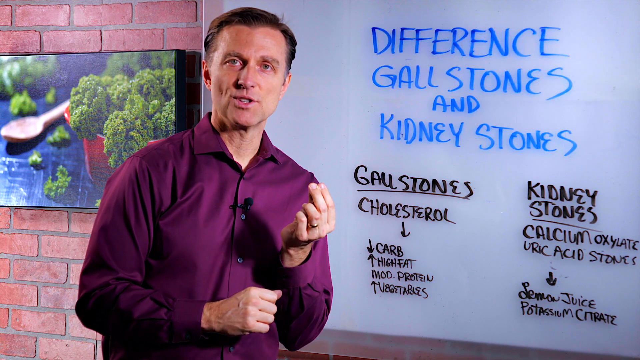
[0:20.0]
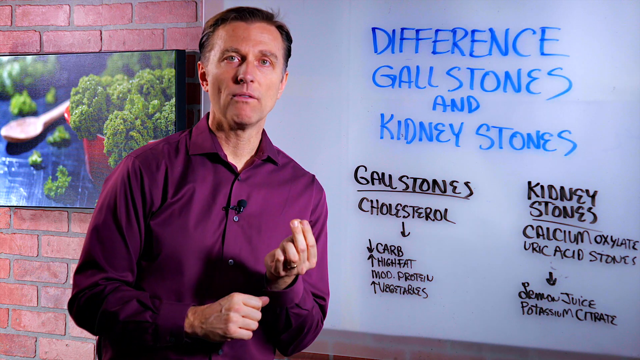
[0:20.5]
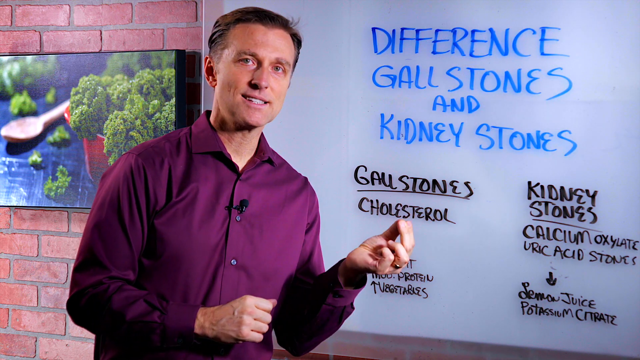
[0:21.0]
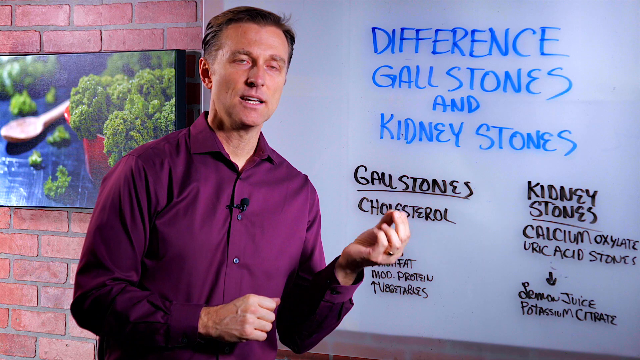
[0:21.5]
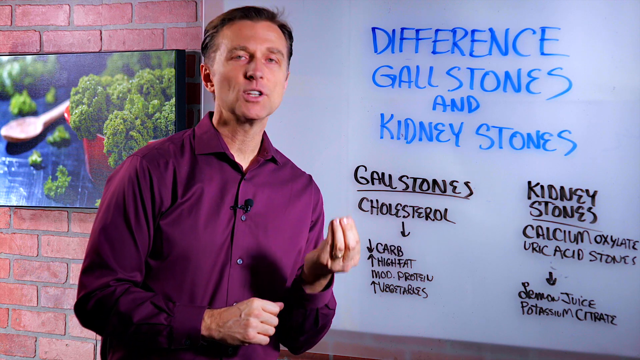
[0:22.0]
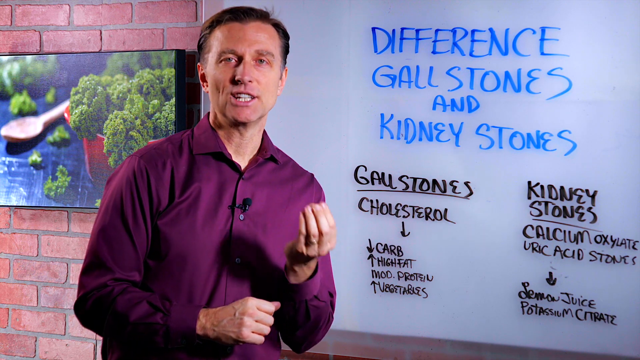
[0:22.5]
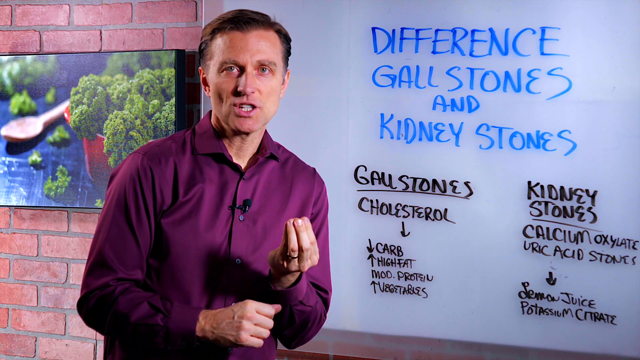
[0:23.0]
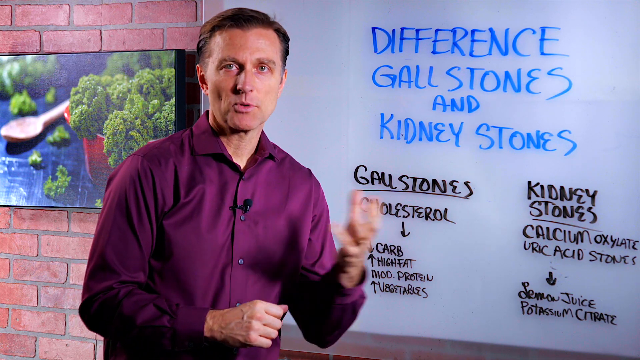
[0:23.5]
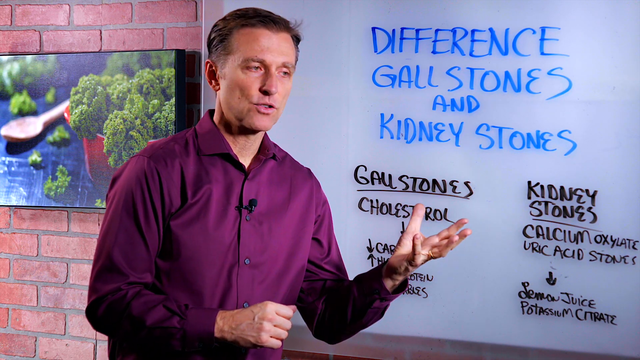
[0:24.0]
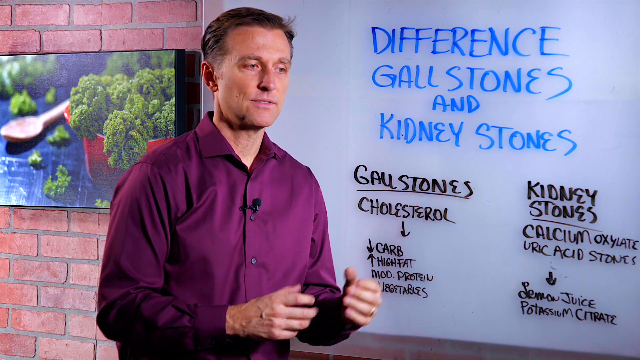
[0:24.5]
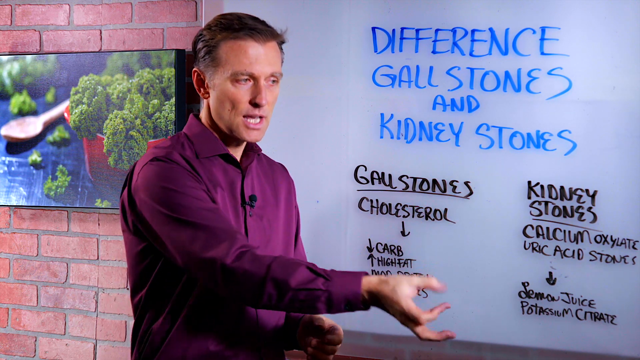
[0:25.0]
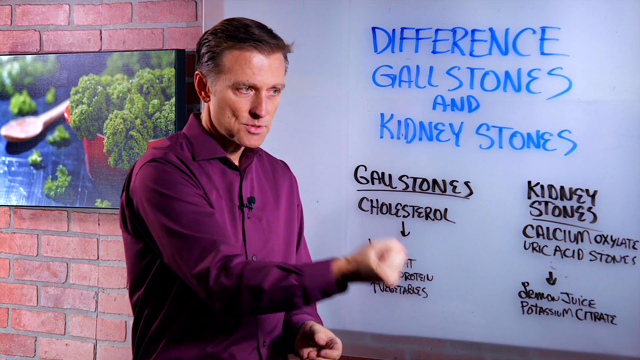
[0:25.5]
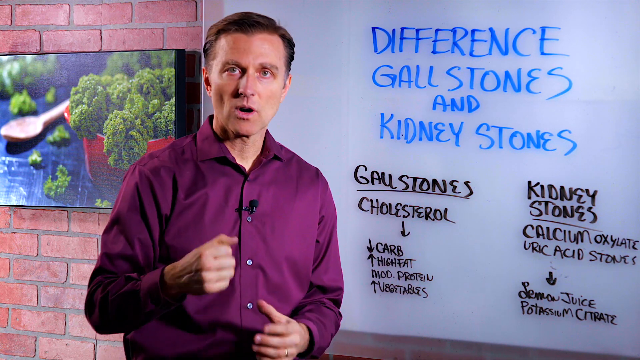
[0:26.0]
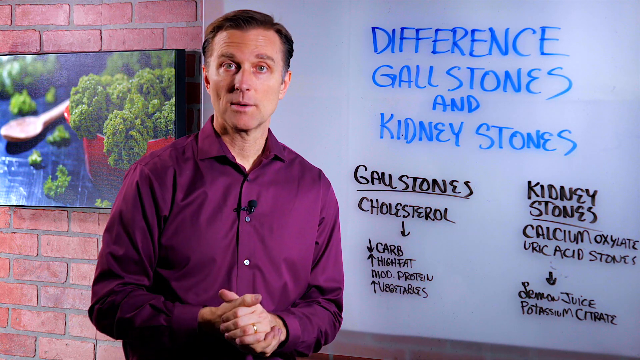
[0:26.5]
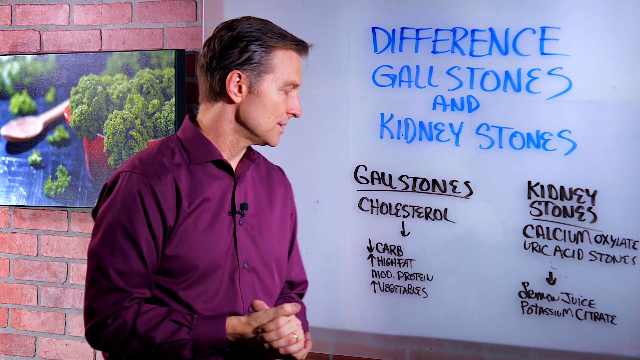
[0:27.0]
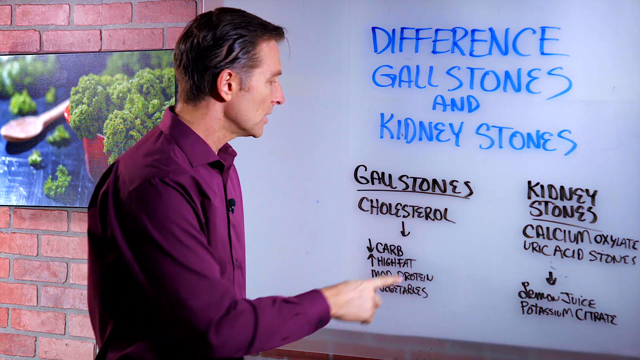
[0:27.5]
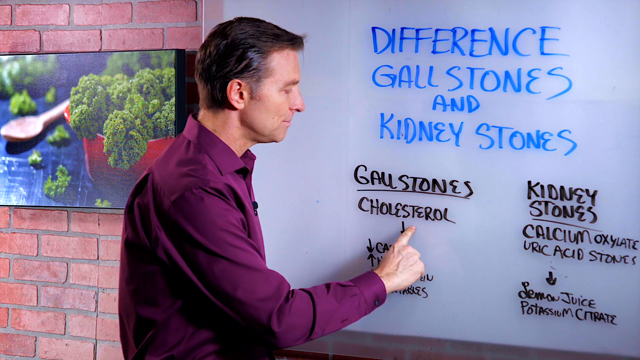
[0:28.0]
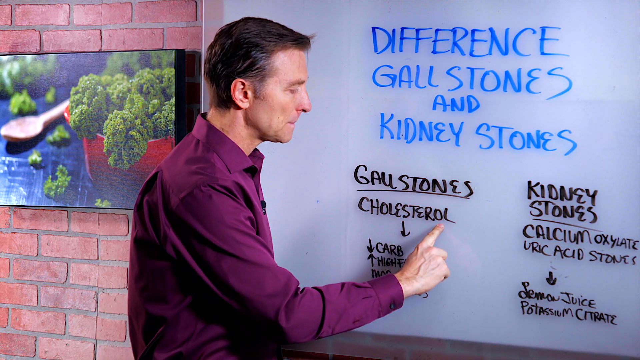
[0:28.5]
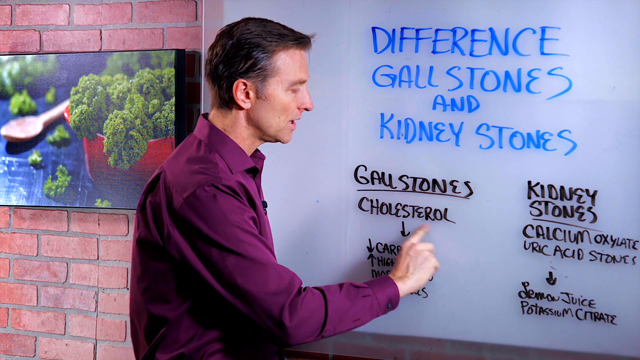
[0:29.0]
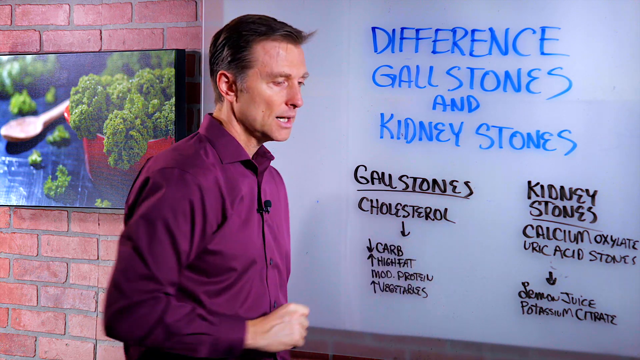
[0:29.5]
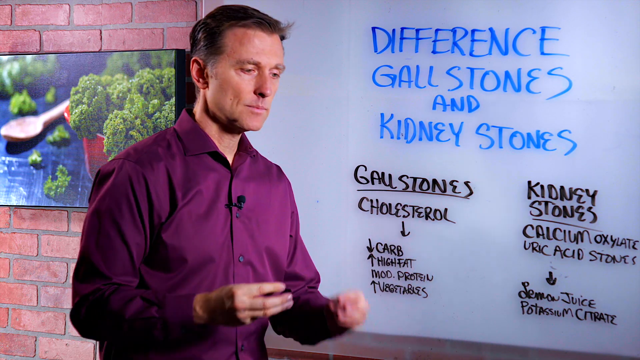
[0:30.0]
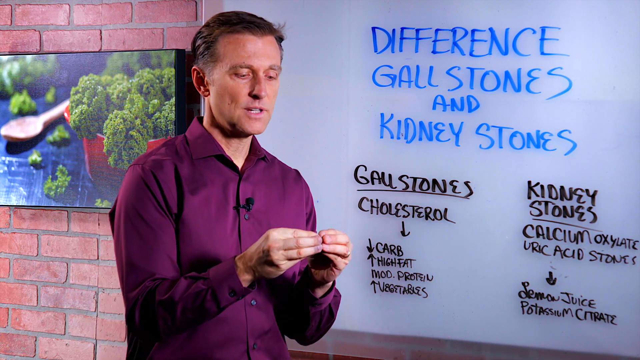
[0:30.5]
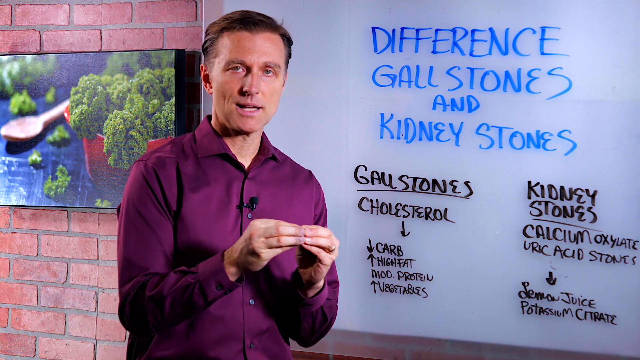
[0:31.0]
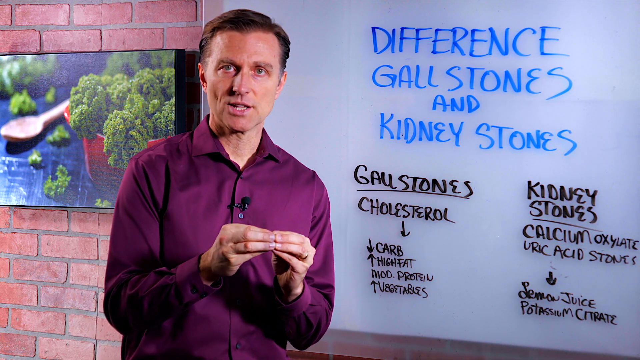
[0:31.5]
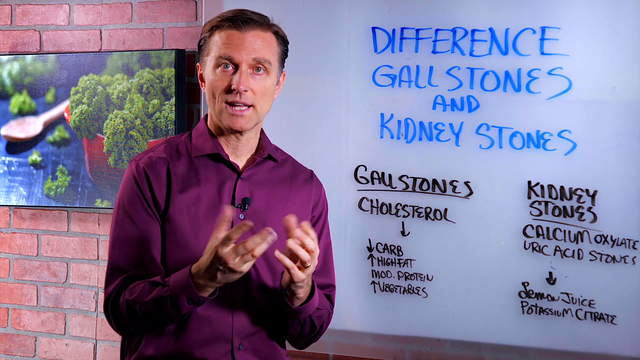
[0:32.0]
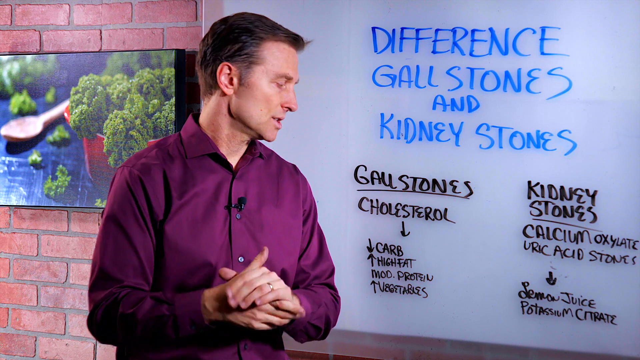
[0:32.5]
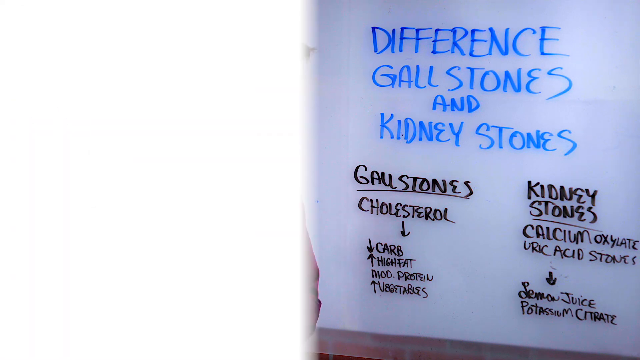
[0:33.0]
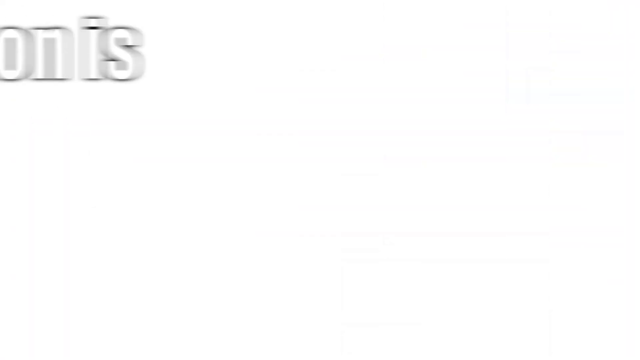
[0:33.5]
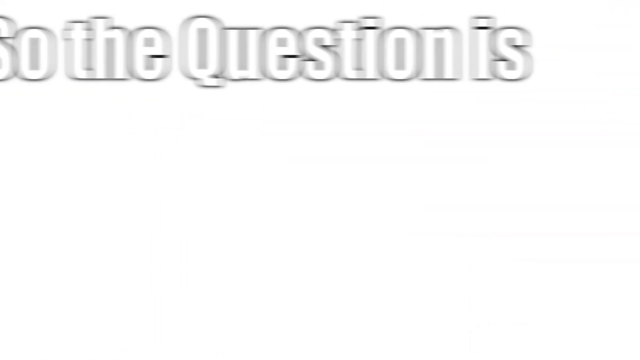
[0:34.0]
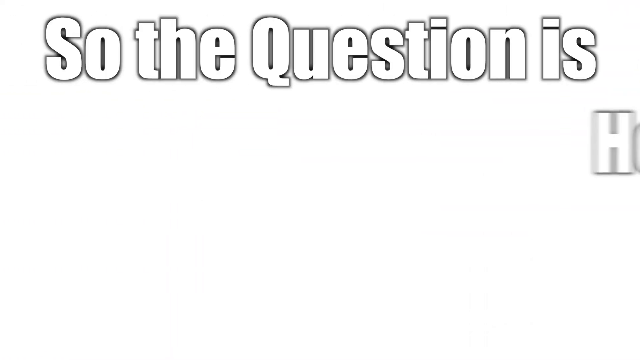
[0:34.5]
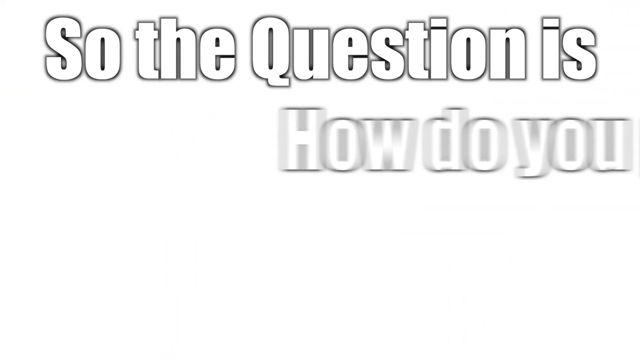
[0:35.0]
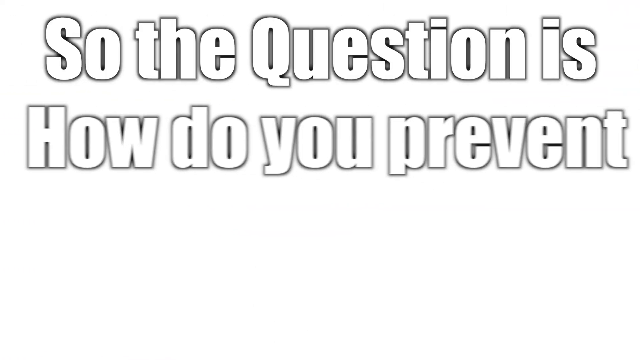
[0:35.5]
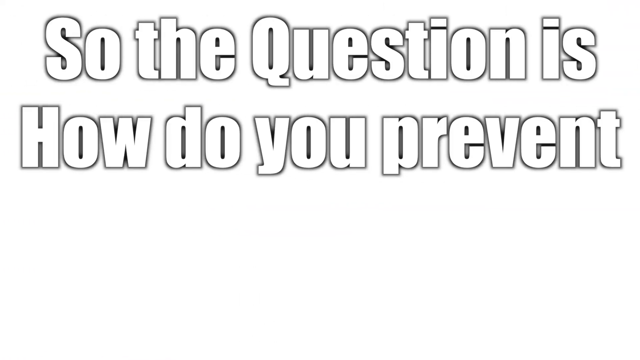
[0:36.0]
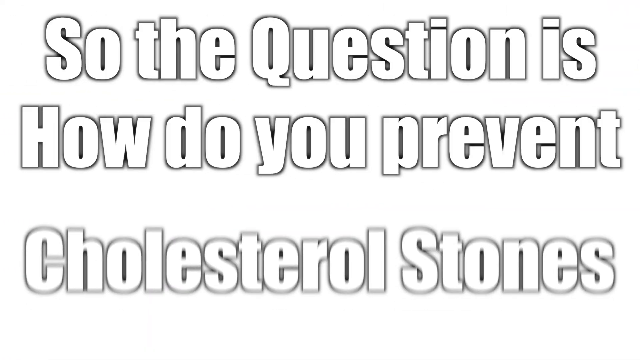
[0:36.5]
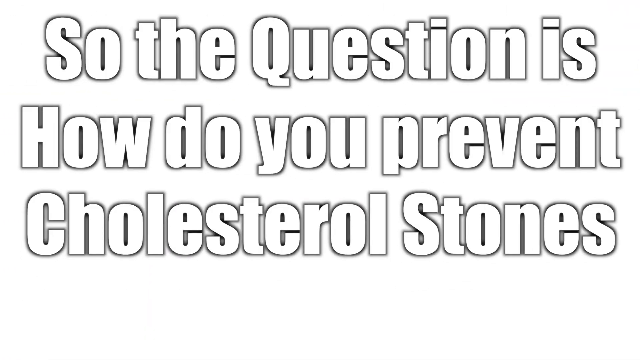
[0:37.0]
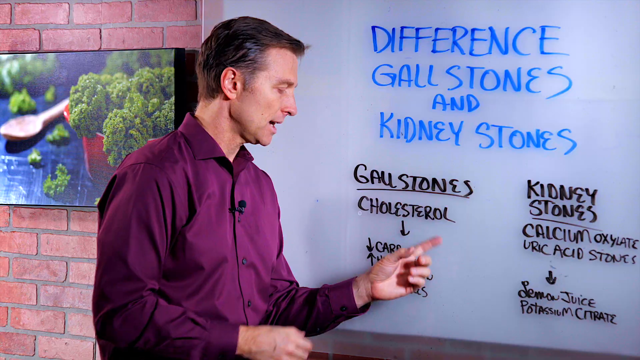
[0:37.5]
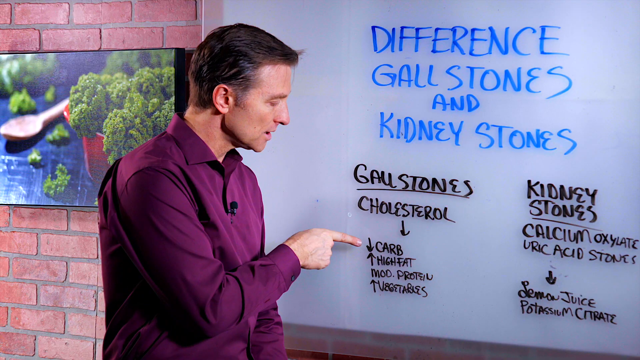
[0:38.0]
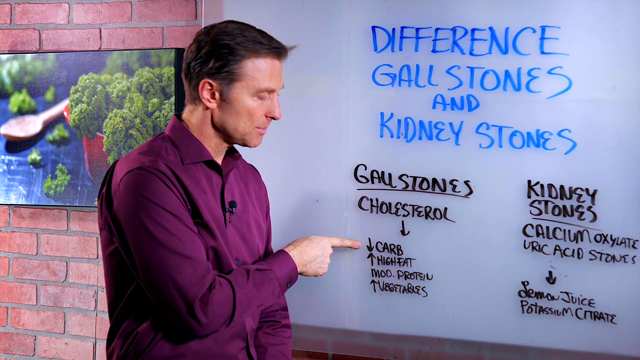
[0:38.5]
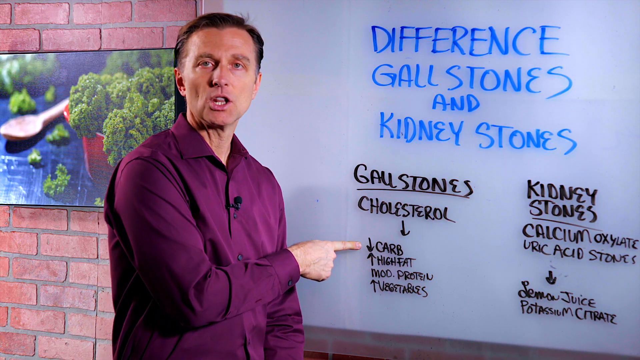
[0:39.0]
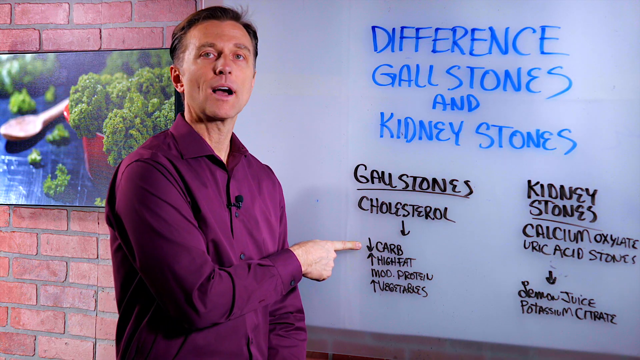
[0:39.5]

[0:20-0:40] The man with short brown hair and the purple button-down collared shirt keeps speaking to the camera, with the whiteboard behind him on the right and the brick wall behind him on the left, where a photograph or artwork shows a green vegetable or plant in a red pot, a wooden spoon to the left of the pot, and some of the green material scattered on the blue surface. His left thumb, index and middle fingers are pinched together and facing up, while his right hand is clenched and resting in front of his abdomen. He wears a wedding ring on his left hand. With his right hand in a fist he makes an away-and-toward motion, pushing it out and bringing it back toward his abdomen. He then clasps his hands, turns toward the whiteboard and gestures under the word "cholesterol" with his right index finger. He pinches all his fingers against his thumbs on both hands and touches his fingertips together as he speaks. Then a white background appears with text outlined in black and white inside, reading "So the question is, how do you prevent cholesterol stones?"